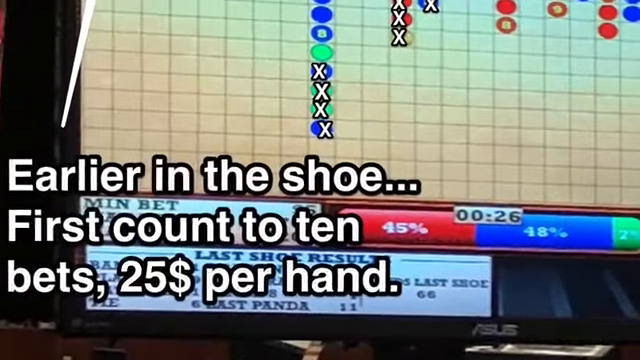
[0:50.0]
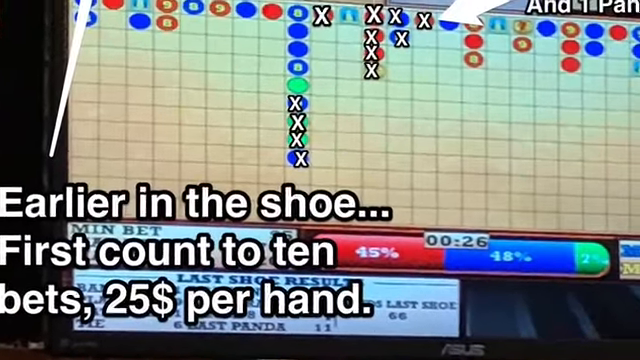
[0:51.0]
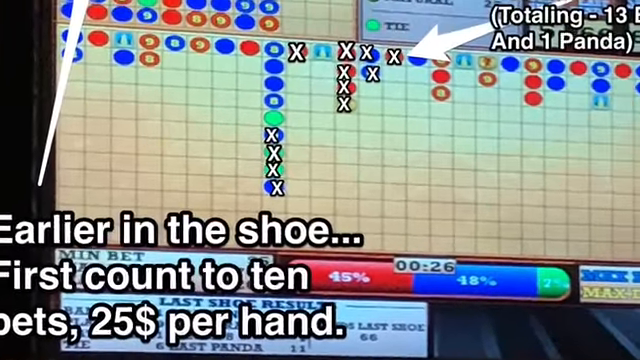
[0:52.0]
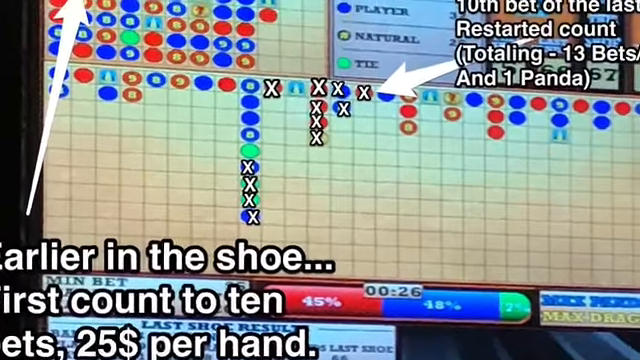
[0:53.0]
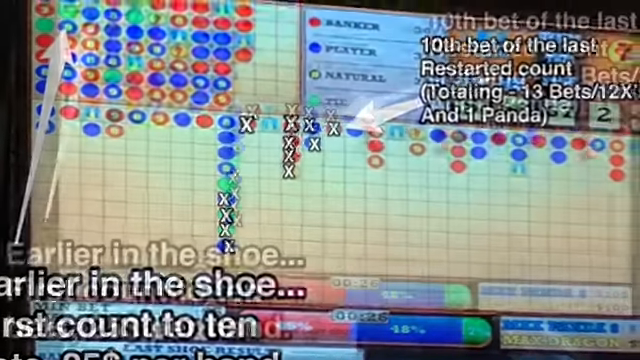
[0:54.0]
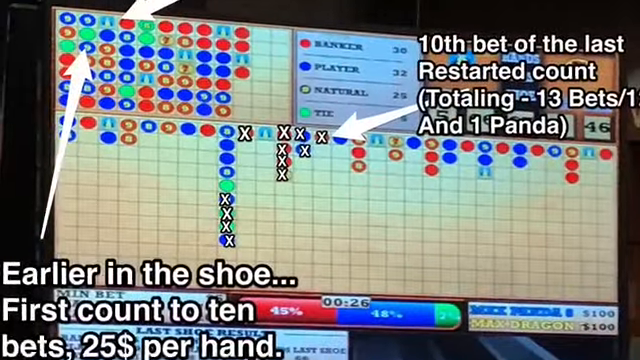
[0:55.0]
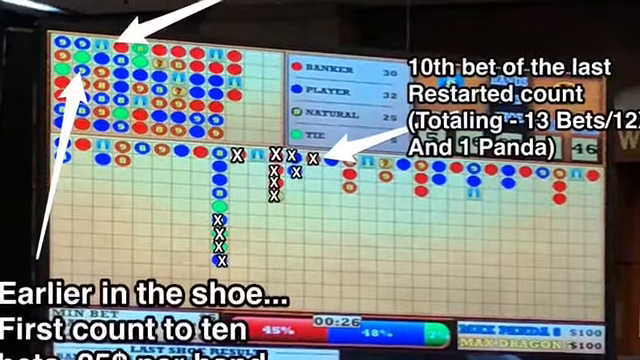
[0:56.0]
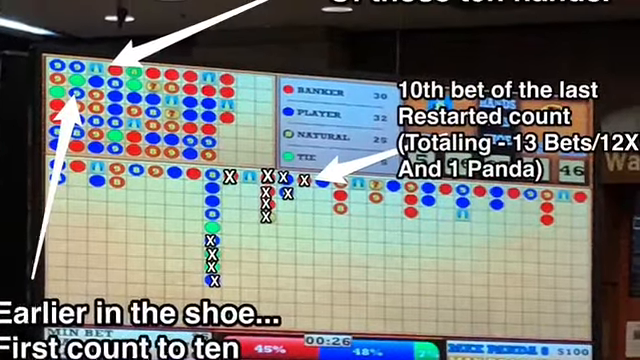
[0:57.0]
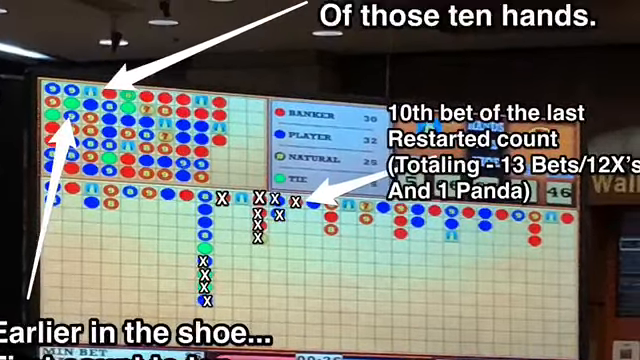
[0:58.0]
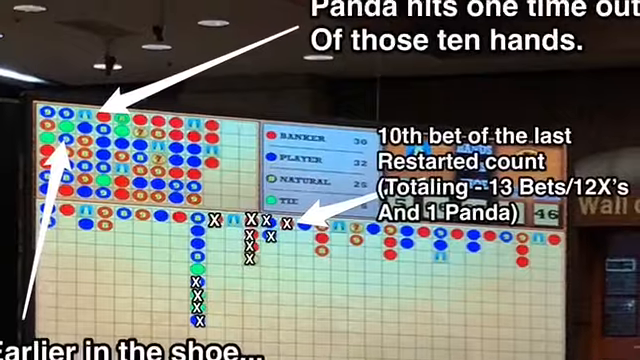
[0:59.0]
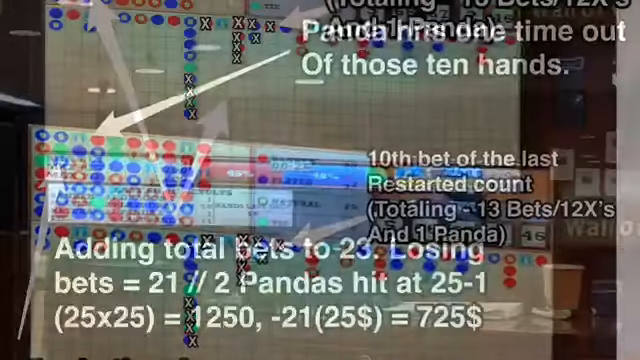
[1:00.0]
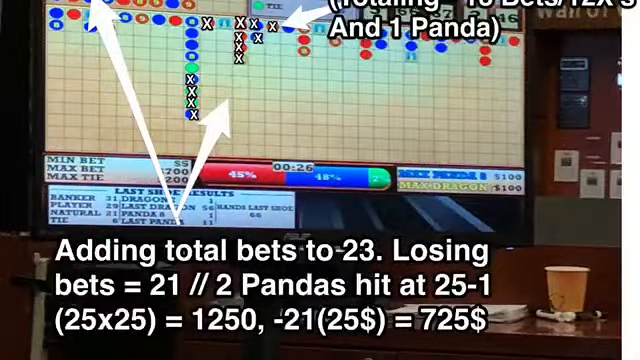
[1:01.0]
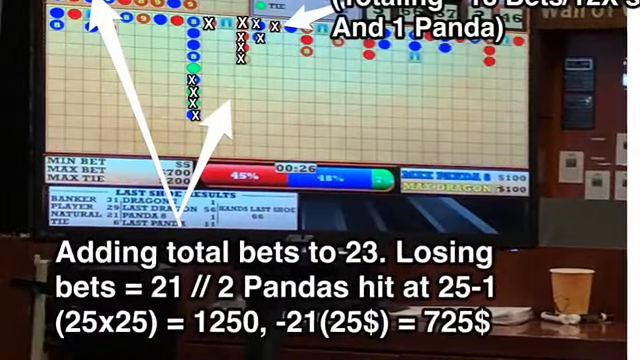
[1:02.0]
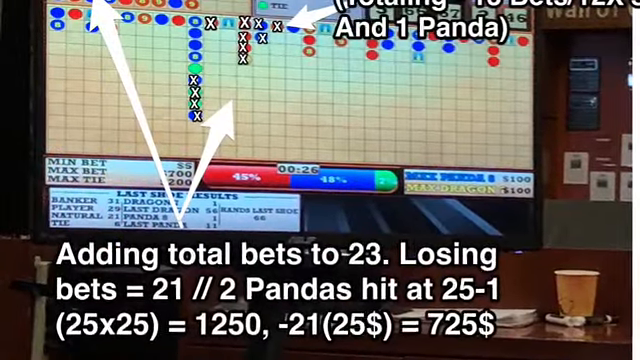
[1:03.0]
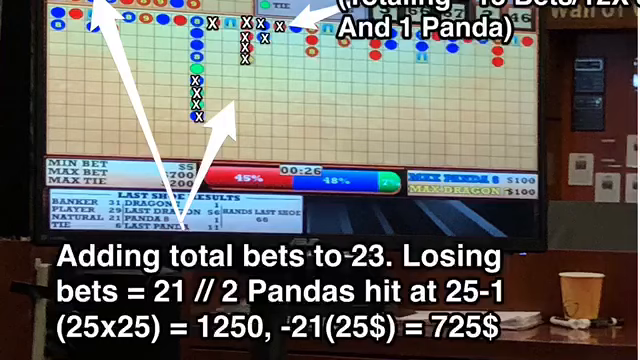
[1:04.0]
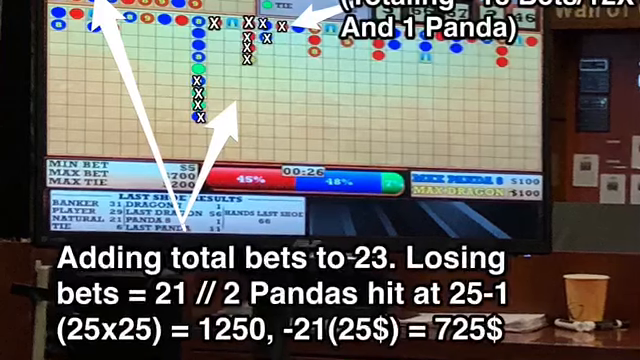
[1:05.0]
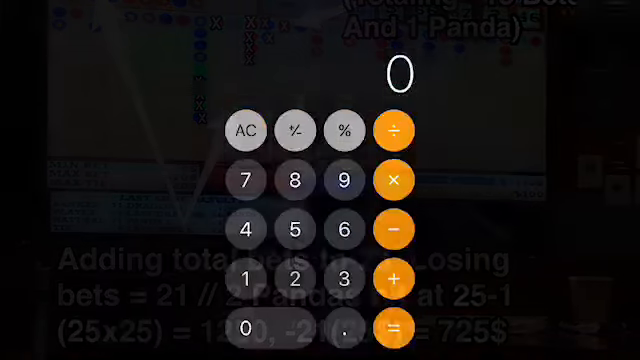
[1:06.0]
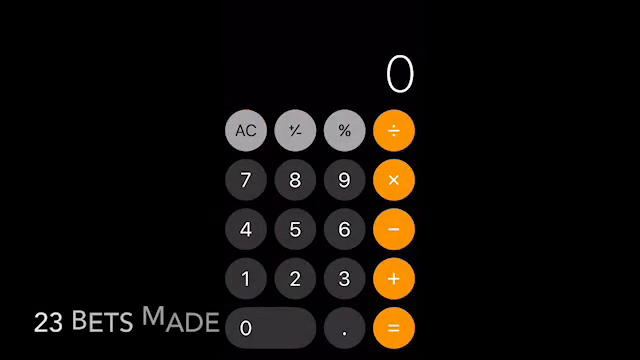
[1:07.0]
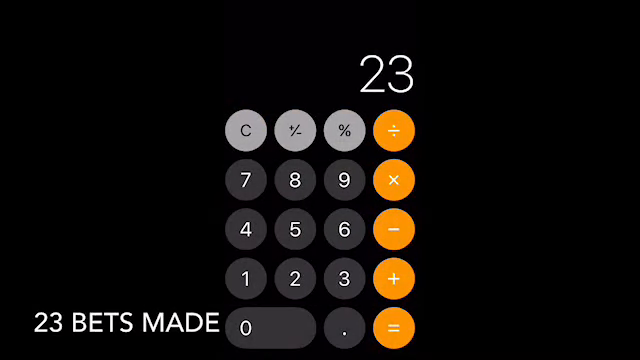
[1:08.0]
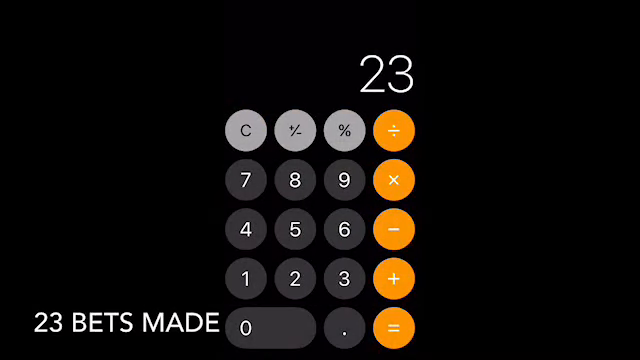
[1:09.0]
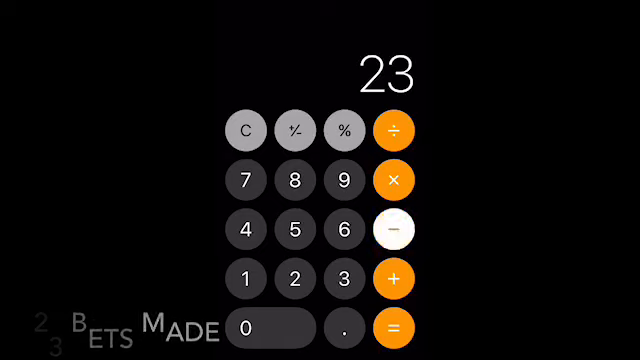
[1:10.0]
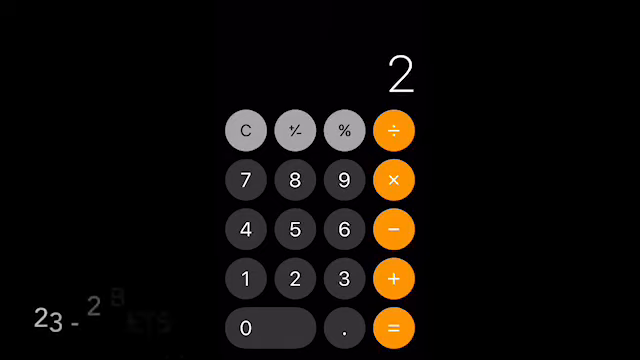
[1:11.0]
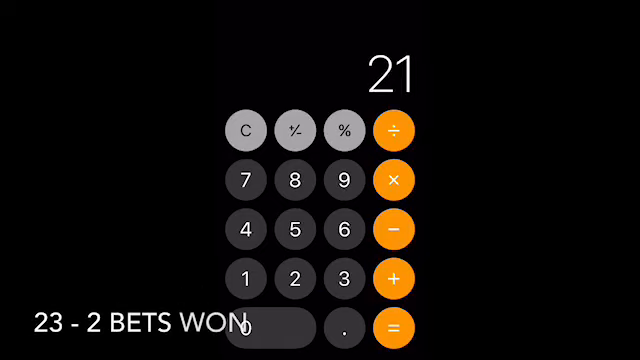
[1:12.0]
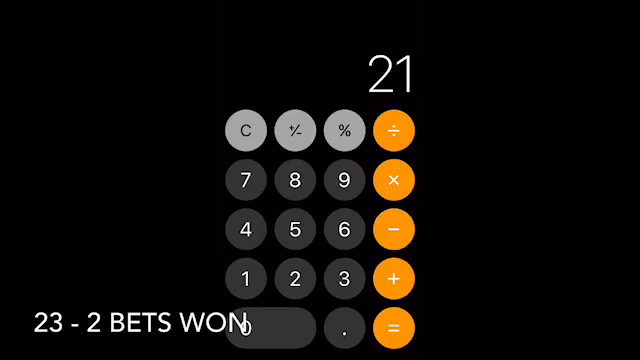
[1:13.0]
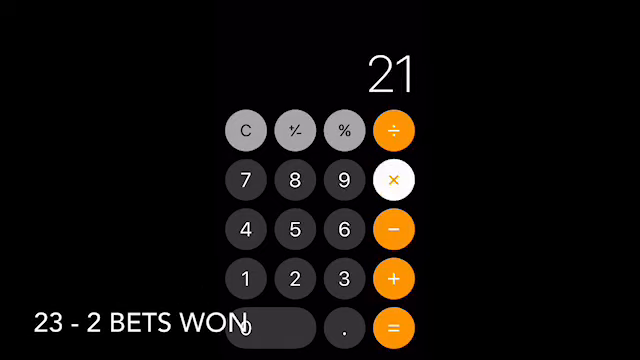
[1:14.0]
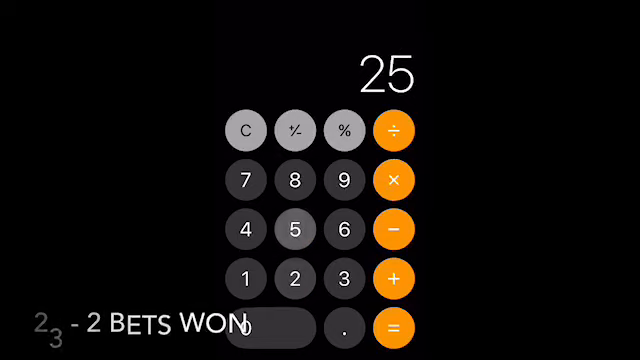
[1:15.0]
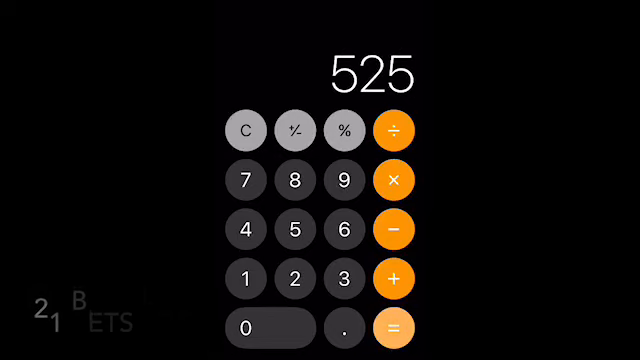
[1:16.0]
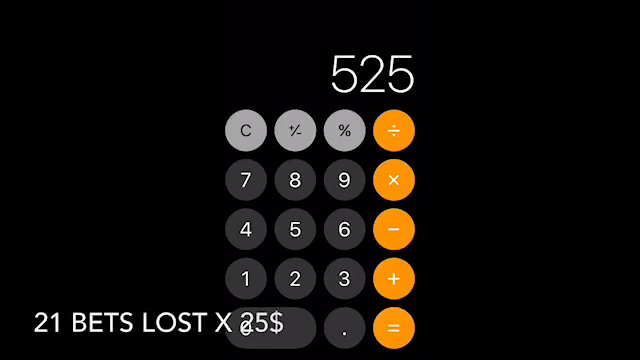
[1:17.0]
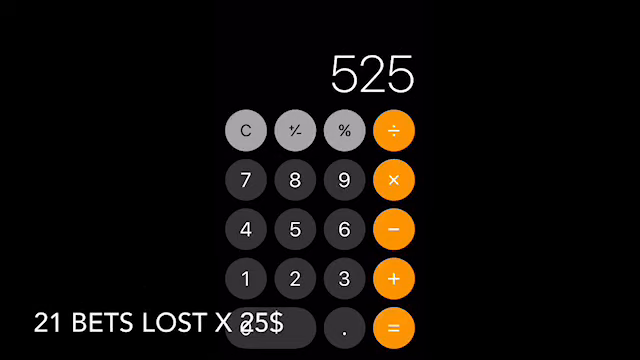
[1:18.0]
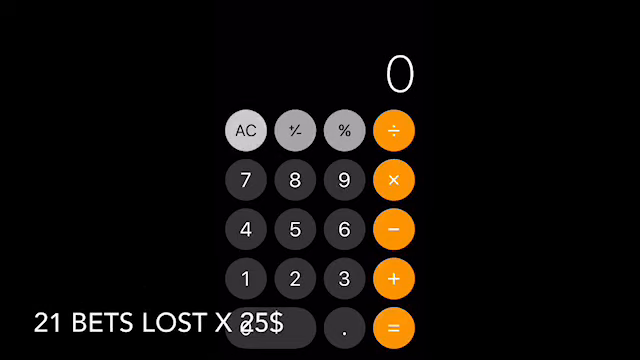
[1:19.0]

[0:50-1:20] Baccarat is played at a table with Asian people around it, and chips are stacked up.